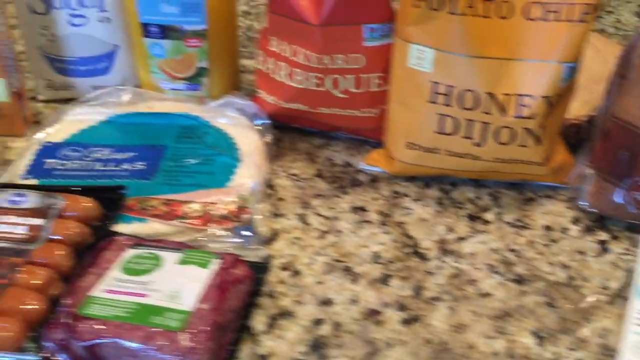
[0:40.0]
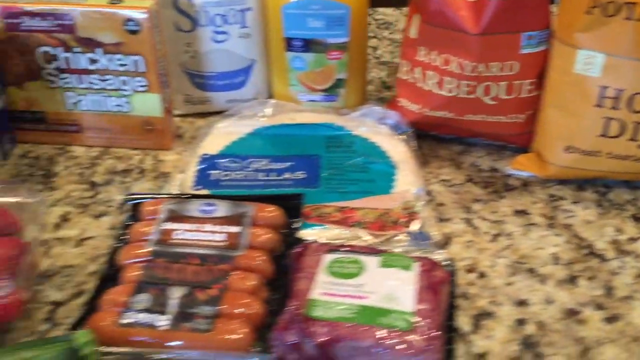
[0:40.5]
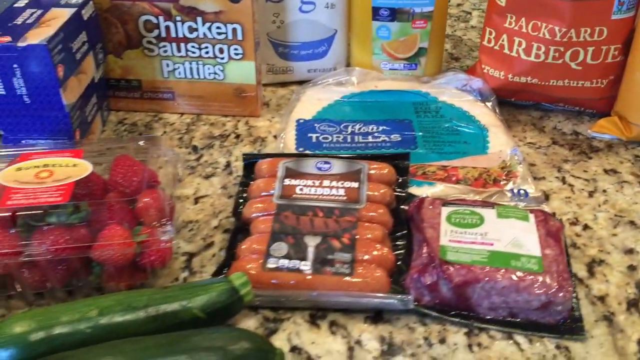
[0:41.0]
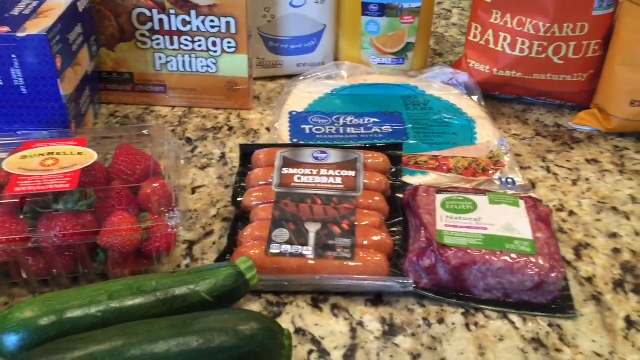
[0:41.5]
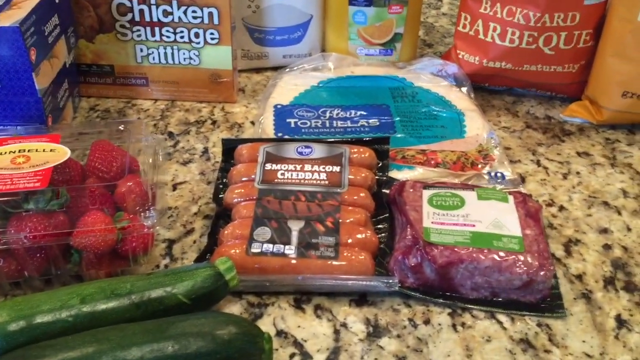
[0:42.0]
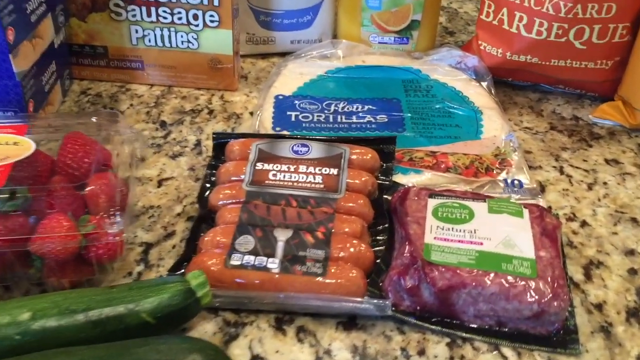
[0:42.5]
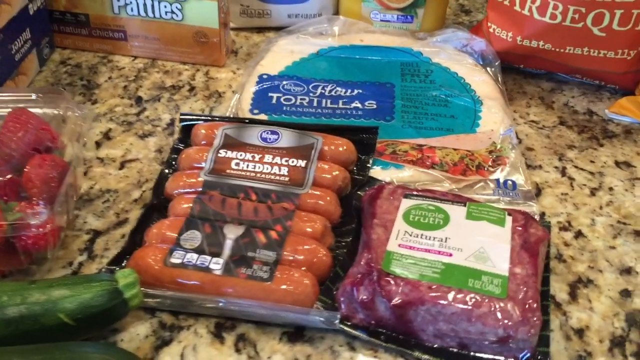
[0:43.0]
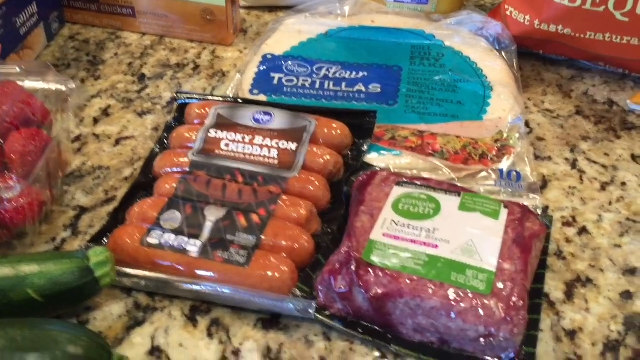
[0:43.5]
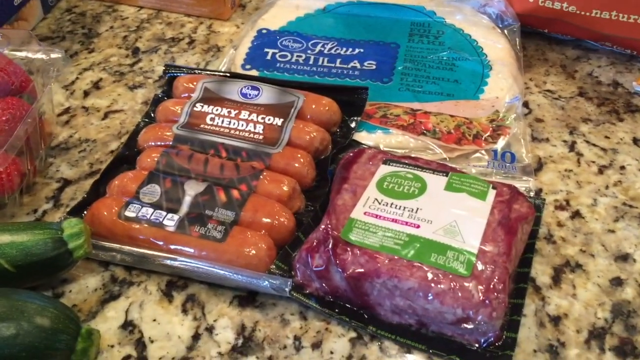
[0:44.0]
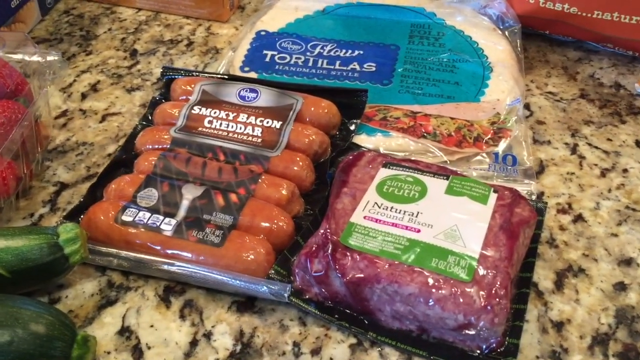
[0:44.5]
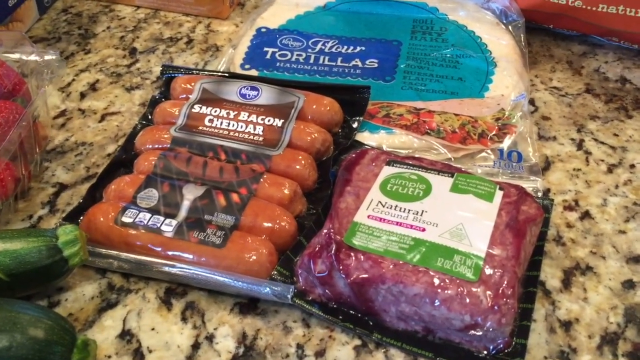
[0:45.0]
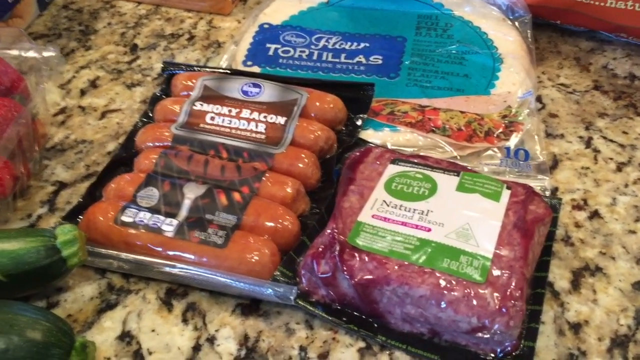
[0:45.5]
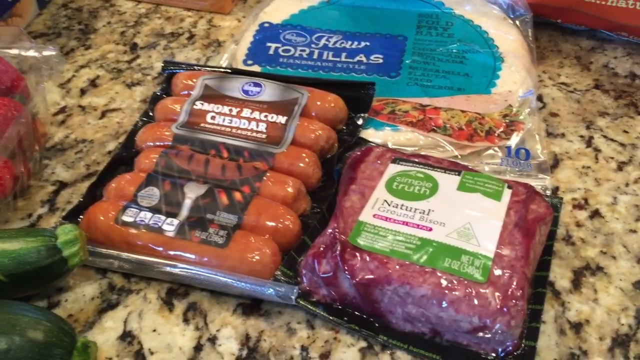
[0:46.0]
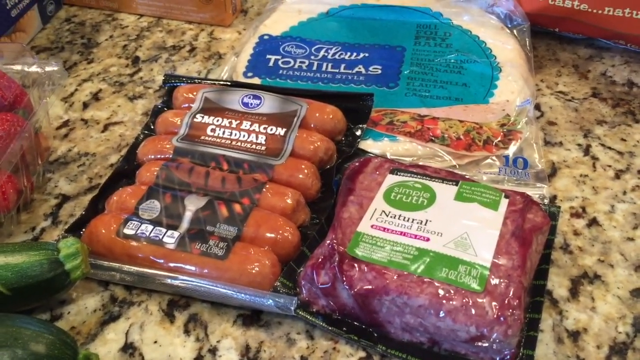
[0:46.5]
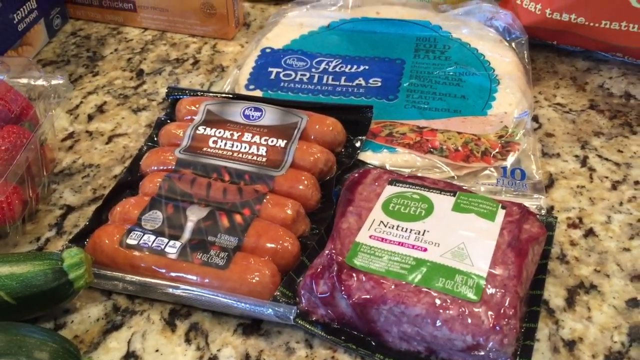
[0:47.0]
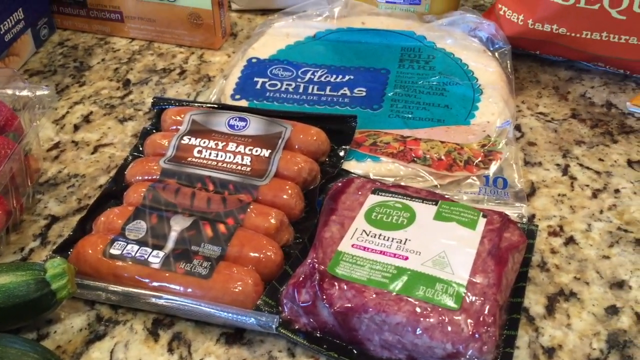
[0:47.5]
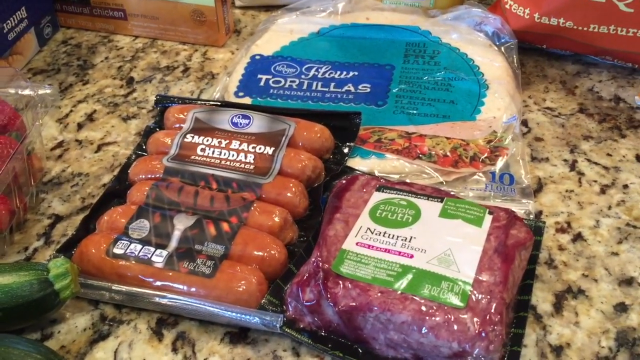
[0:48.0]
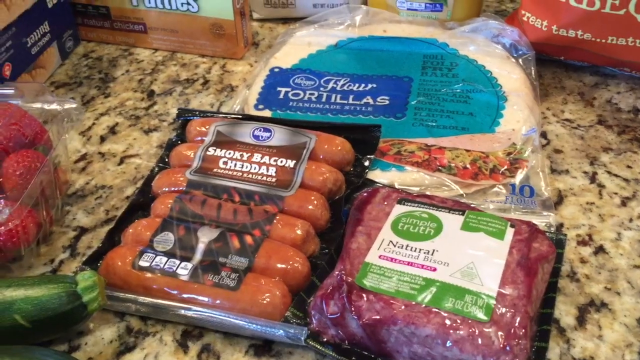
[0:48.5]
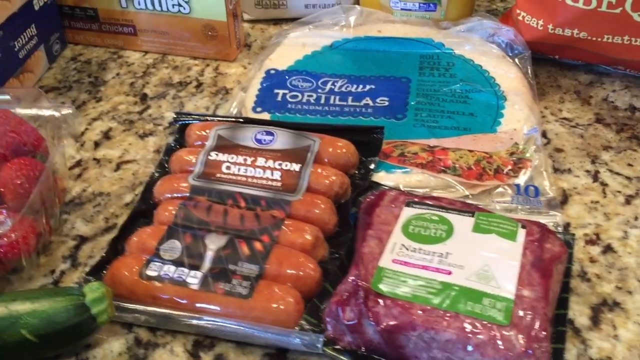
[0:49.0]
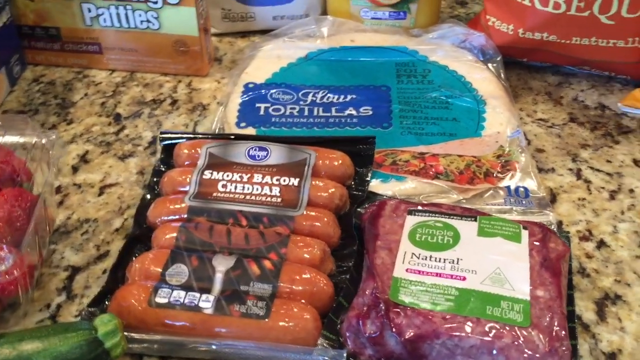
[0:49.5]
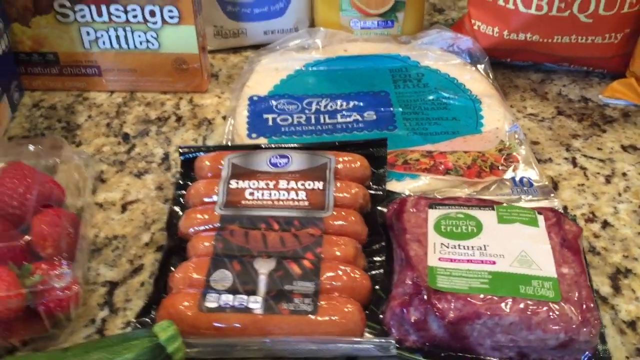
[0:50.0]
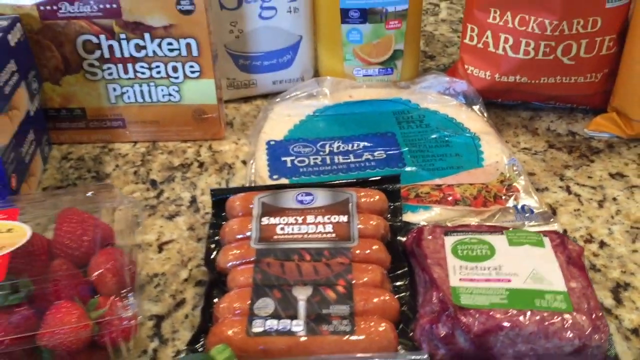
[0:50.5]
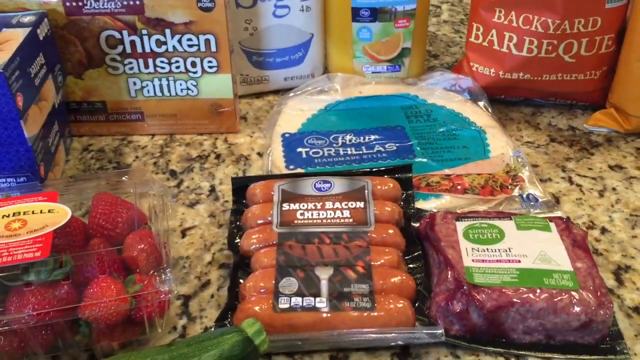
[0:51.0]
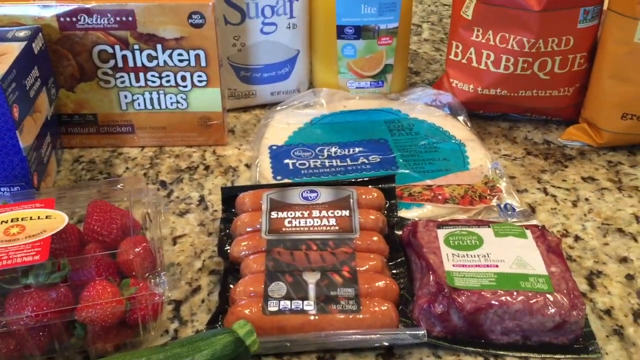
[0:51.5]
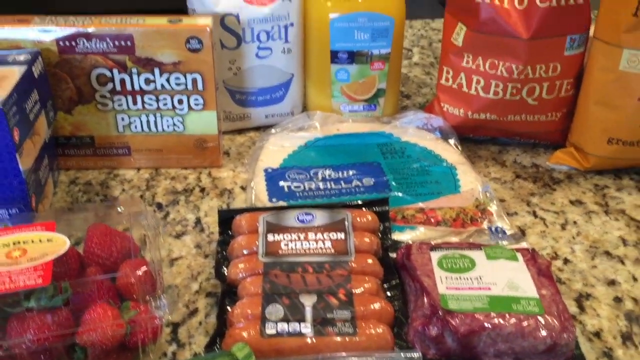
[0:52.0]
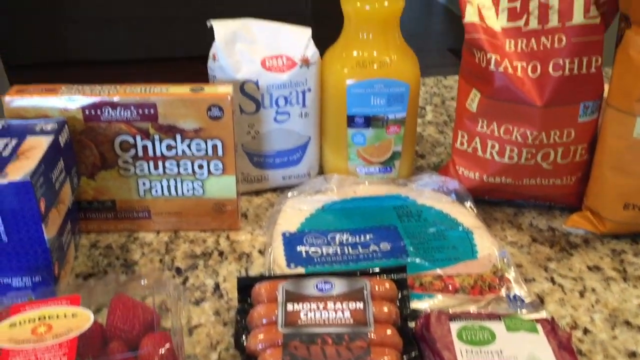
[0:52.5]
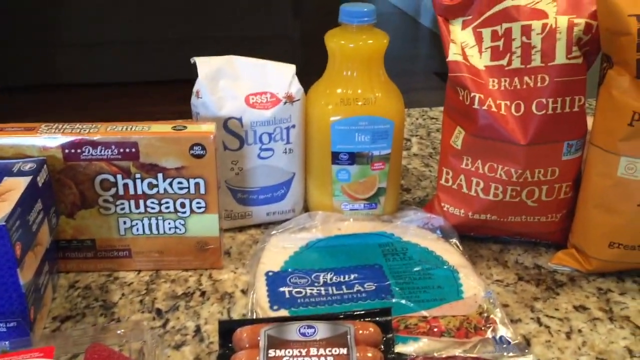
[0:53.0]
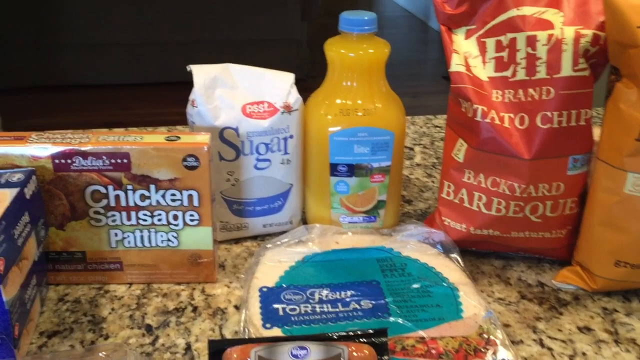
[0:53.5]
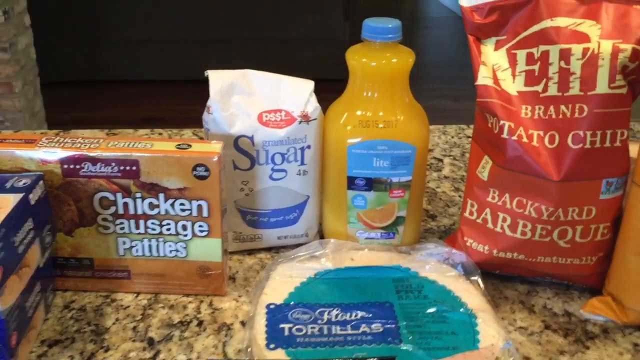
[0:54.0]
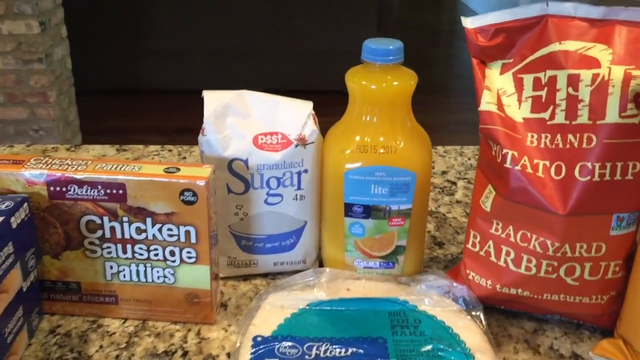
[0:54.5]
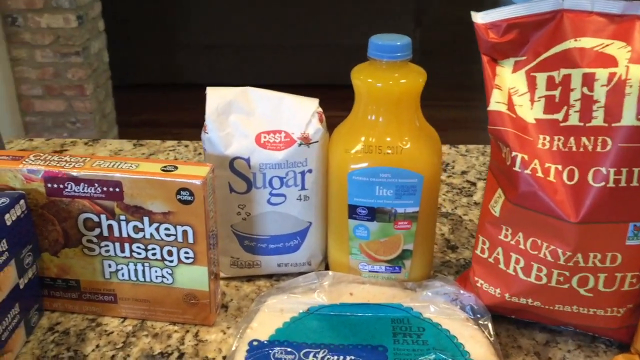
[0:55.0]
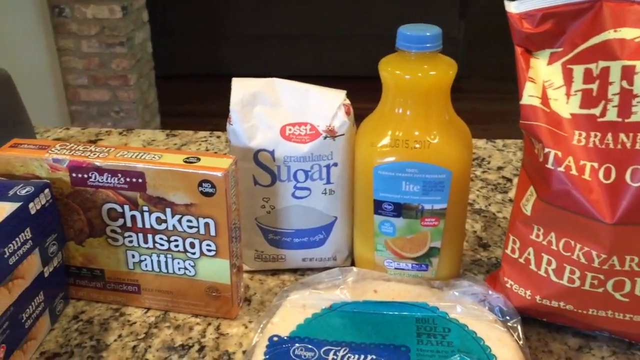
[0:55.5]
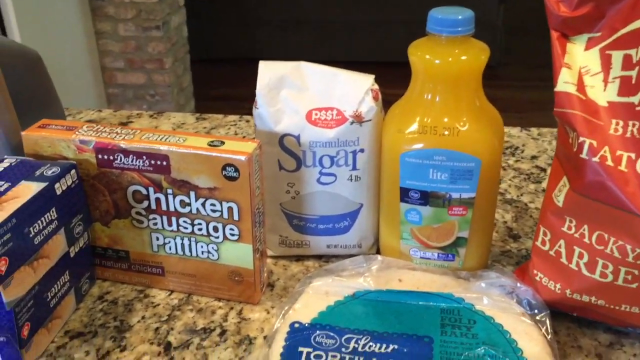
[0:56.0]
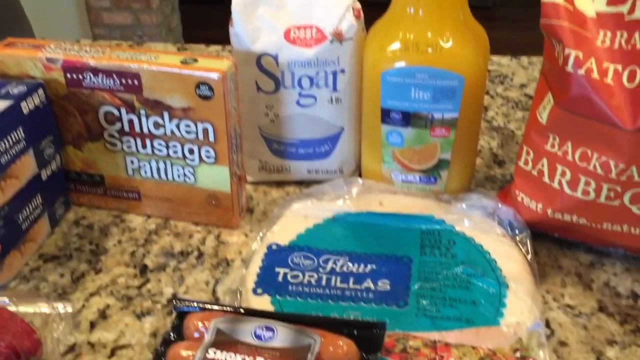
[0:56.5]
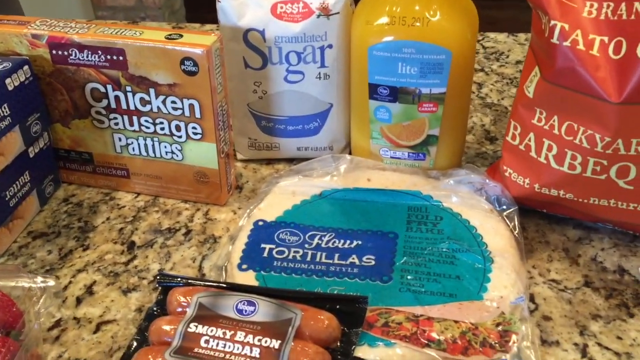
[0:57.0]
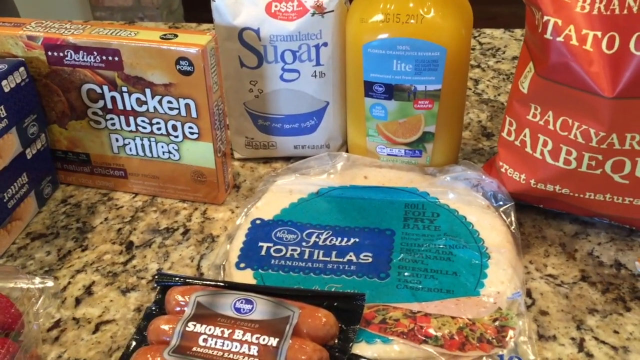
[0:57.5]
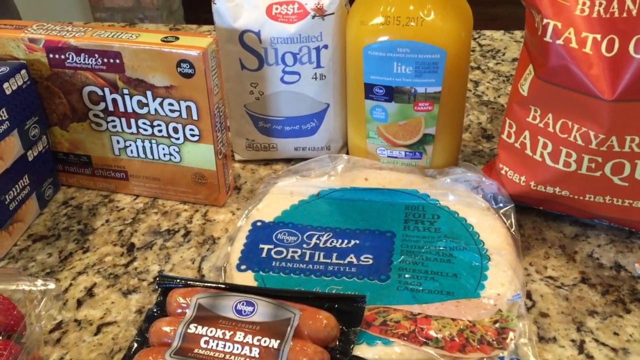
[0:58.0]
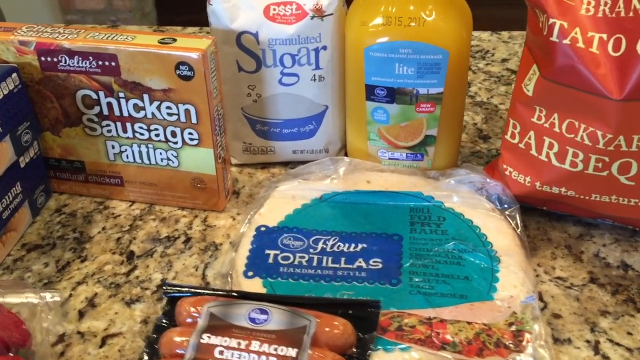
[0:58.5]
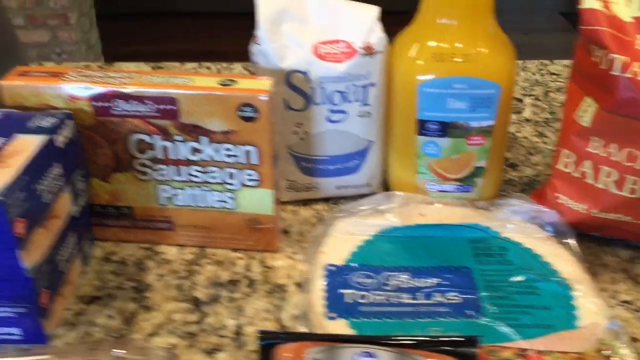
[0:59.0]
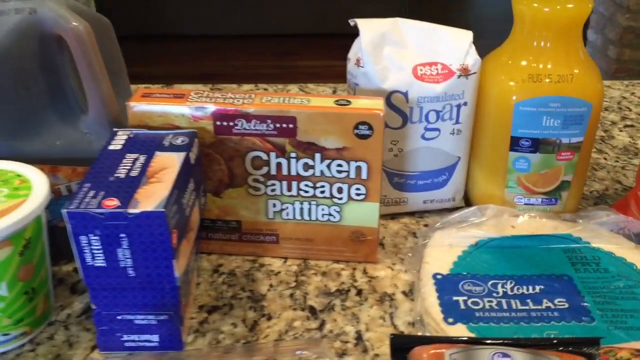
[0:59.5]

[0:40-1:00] The items are shown one by one: smoky bacon cheddar with cheese inside, sugar, potato chips, some sausage, and some strawberries.